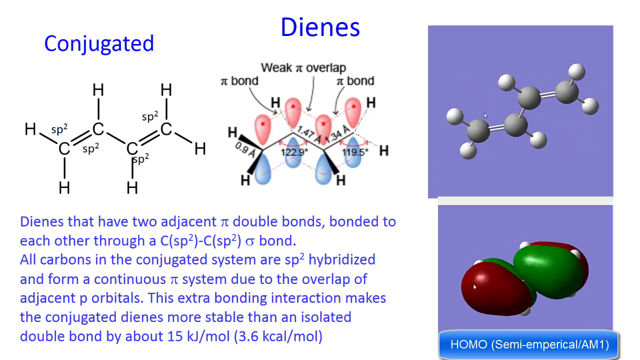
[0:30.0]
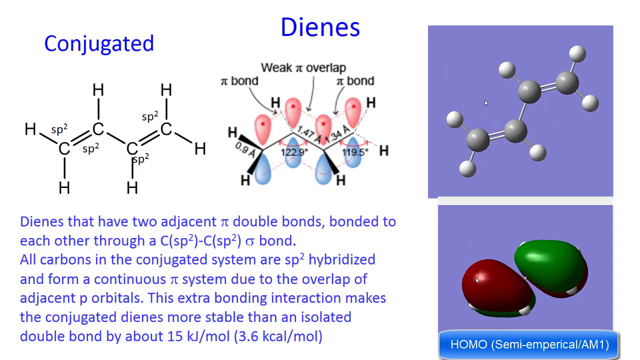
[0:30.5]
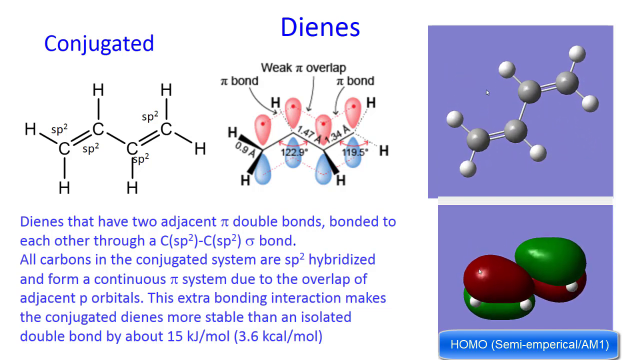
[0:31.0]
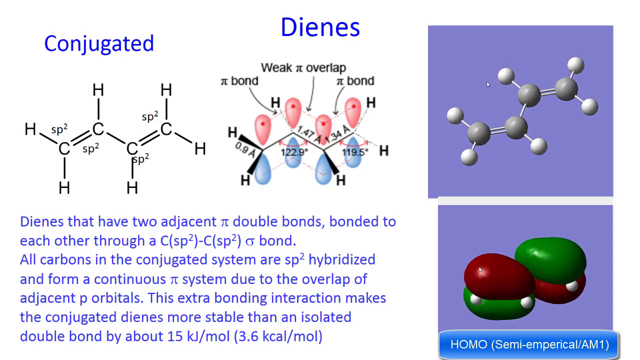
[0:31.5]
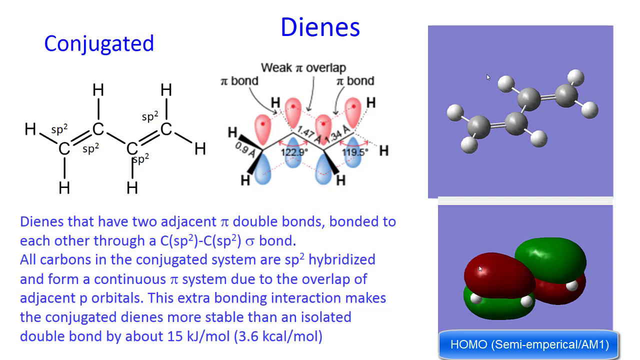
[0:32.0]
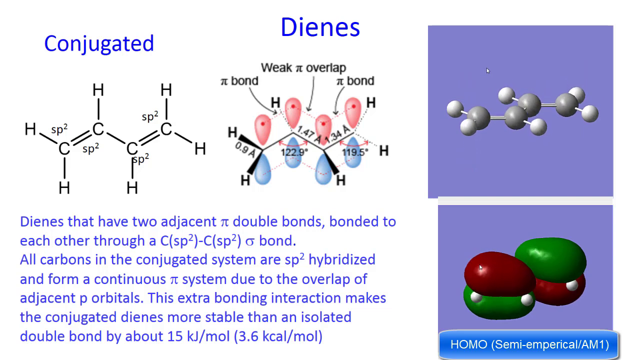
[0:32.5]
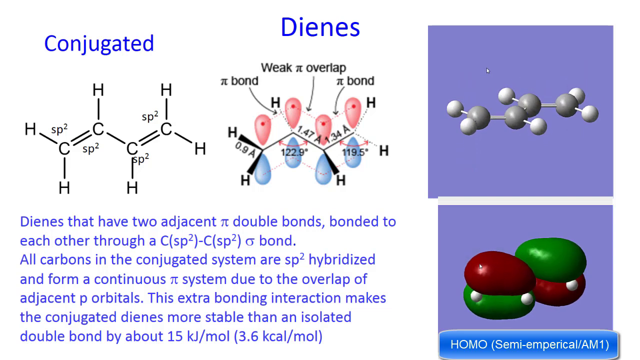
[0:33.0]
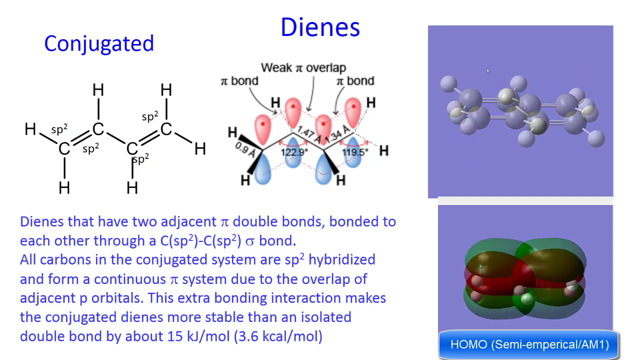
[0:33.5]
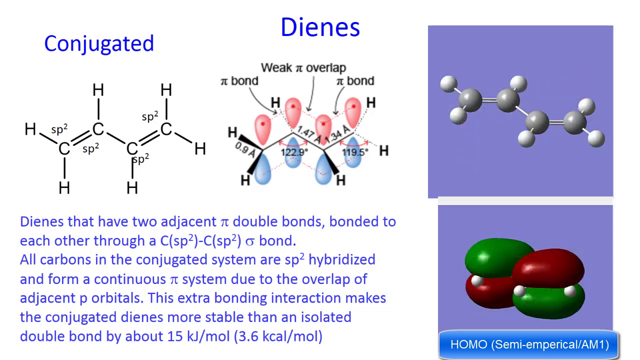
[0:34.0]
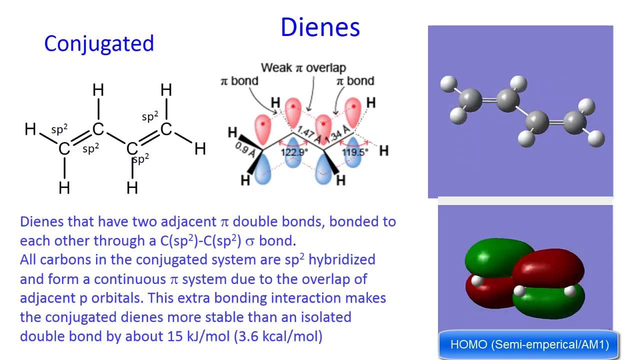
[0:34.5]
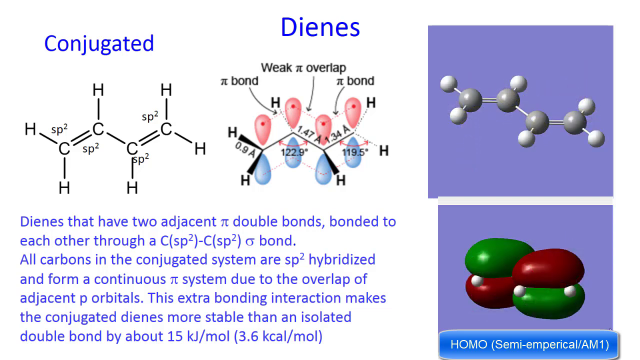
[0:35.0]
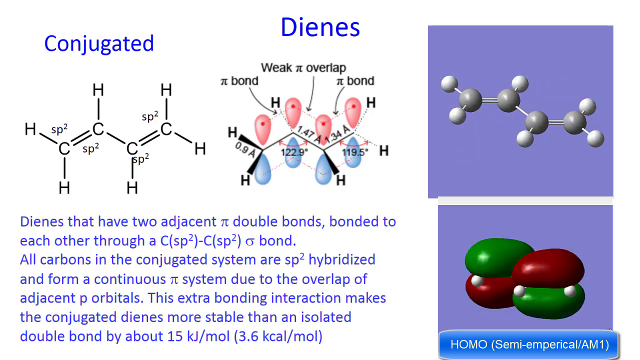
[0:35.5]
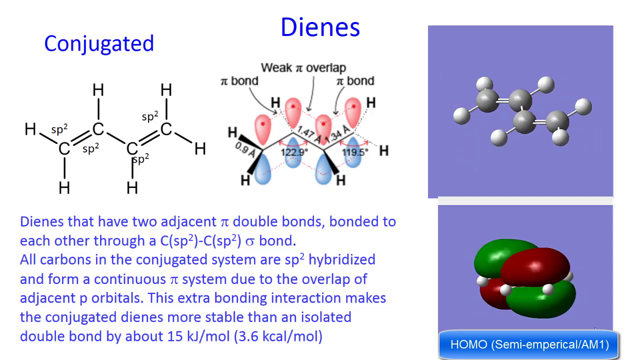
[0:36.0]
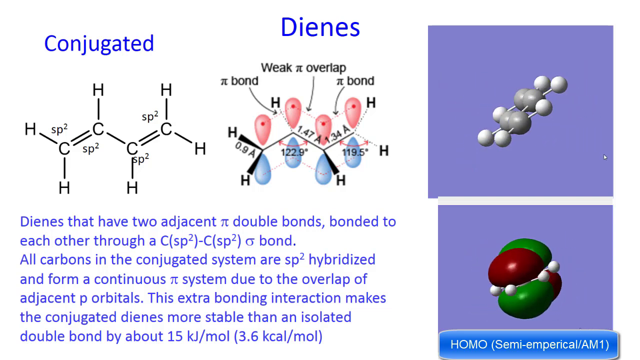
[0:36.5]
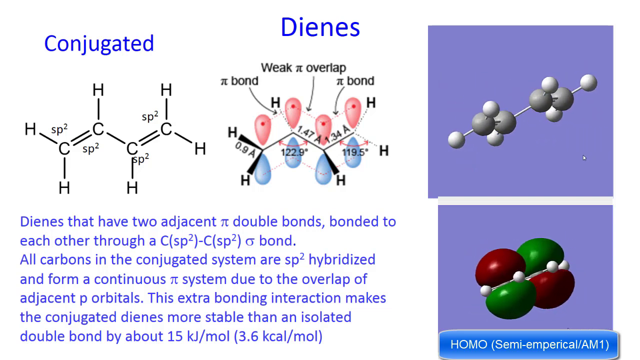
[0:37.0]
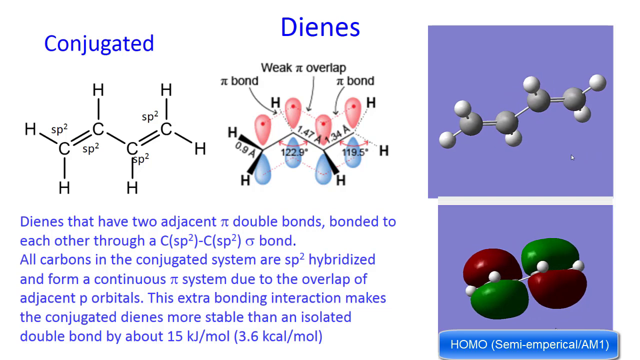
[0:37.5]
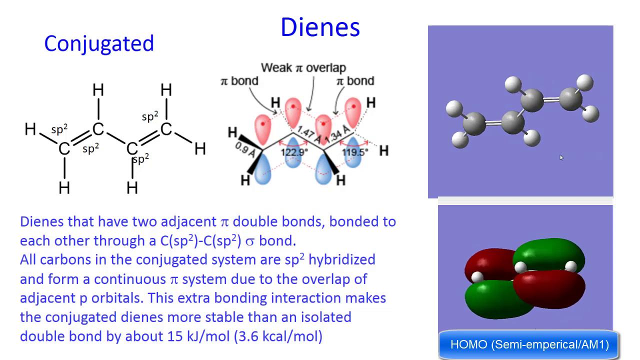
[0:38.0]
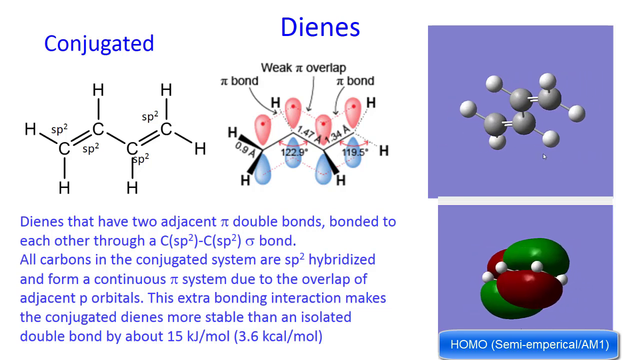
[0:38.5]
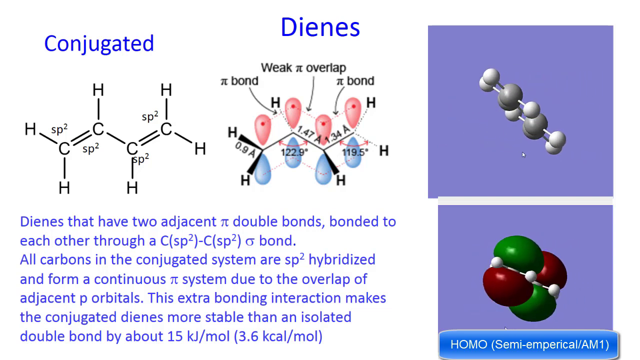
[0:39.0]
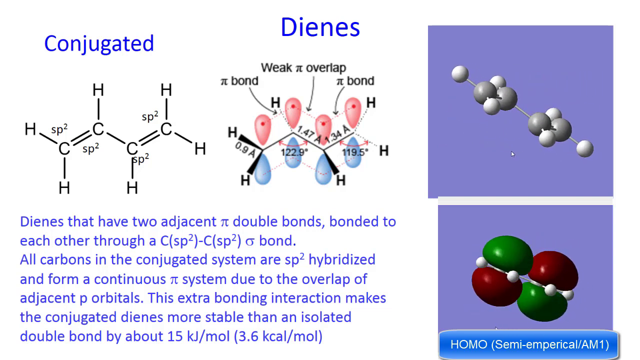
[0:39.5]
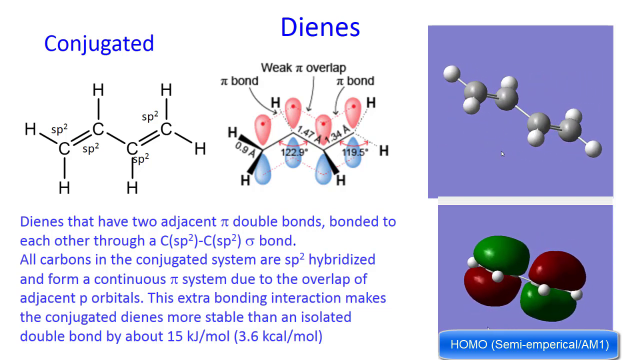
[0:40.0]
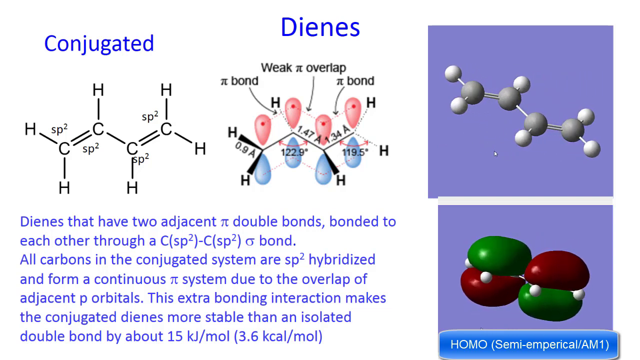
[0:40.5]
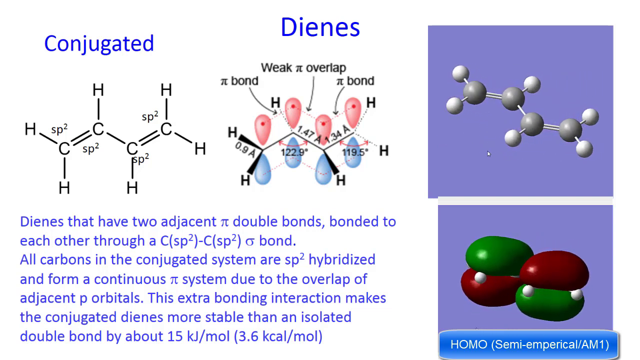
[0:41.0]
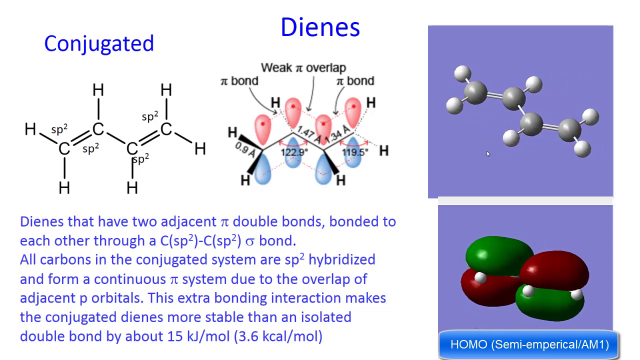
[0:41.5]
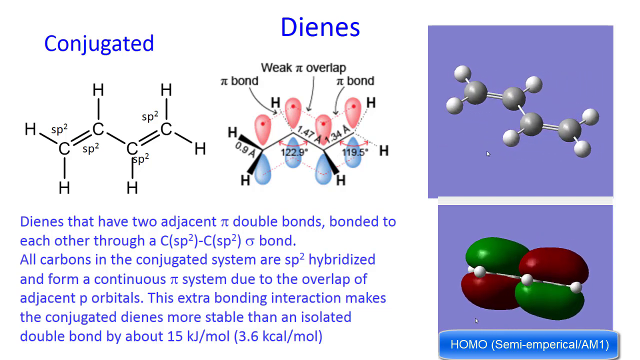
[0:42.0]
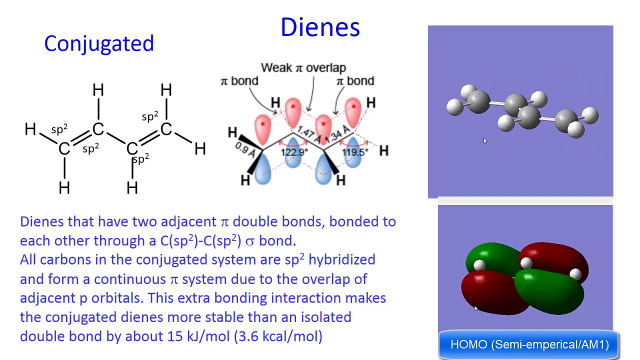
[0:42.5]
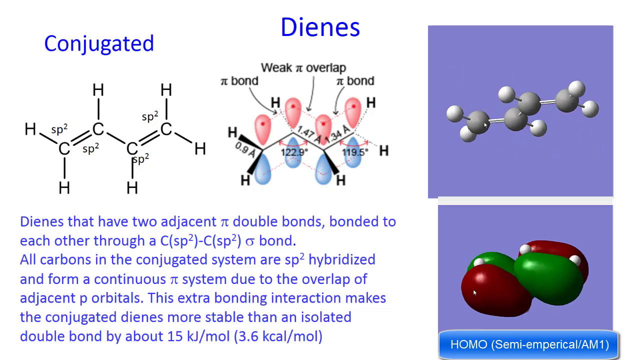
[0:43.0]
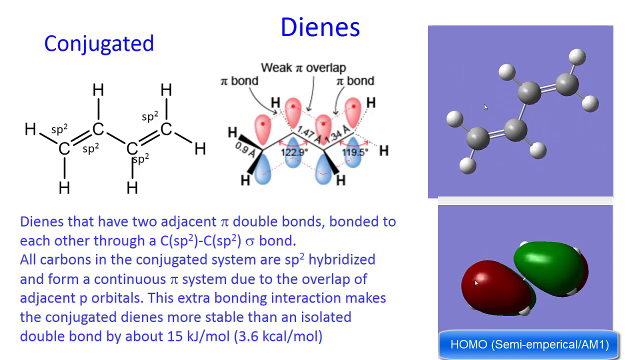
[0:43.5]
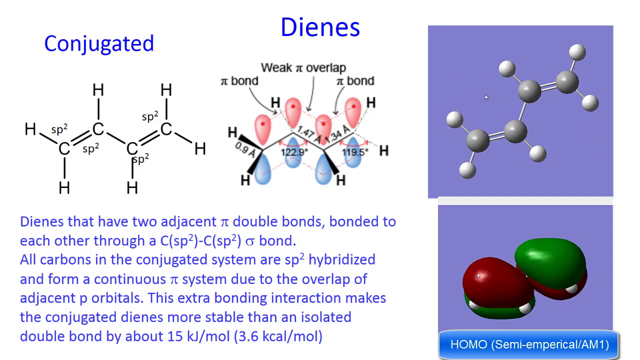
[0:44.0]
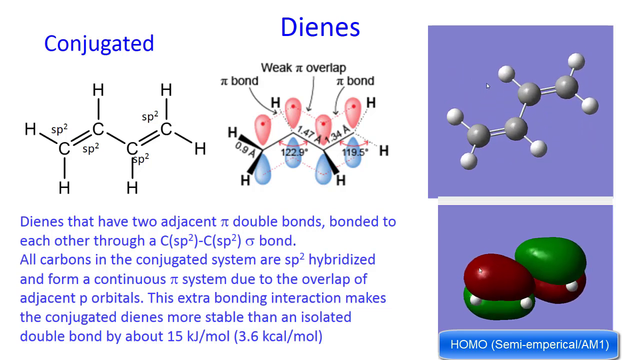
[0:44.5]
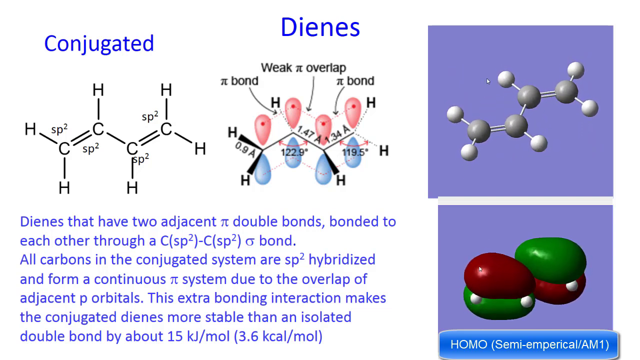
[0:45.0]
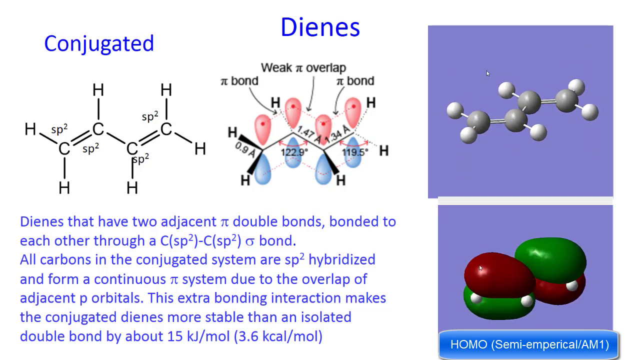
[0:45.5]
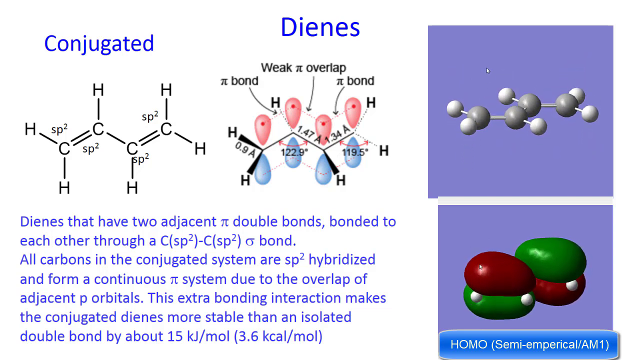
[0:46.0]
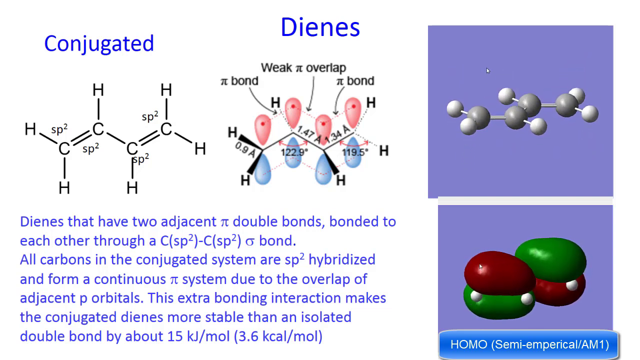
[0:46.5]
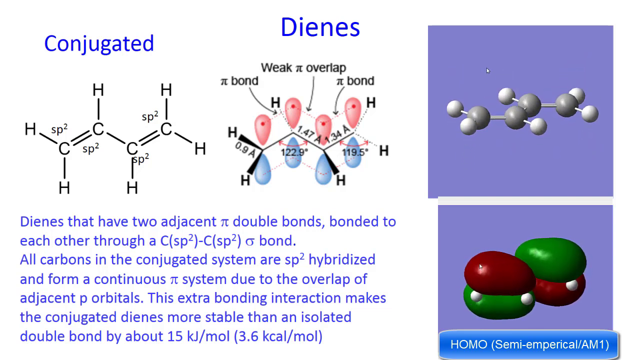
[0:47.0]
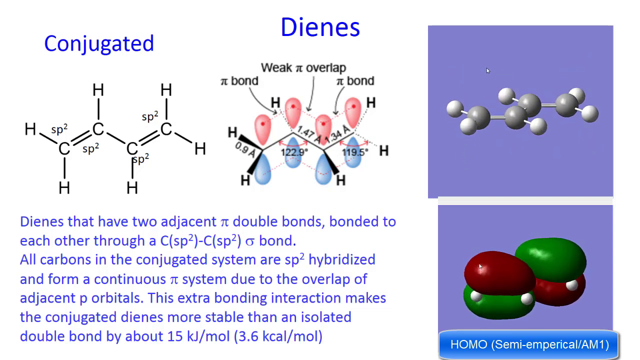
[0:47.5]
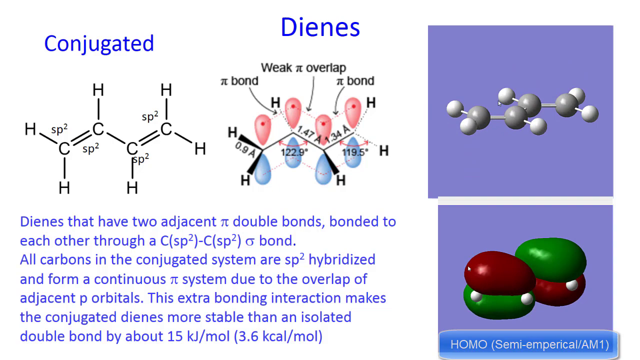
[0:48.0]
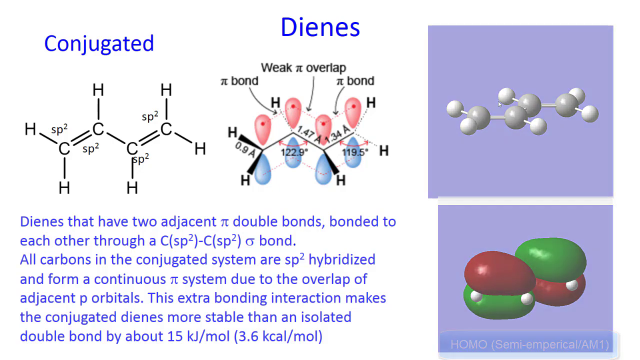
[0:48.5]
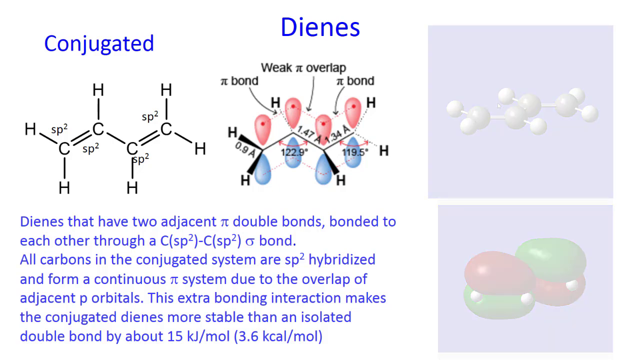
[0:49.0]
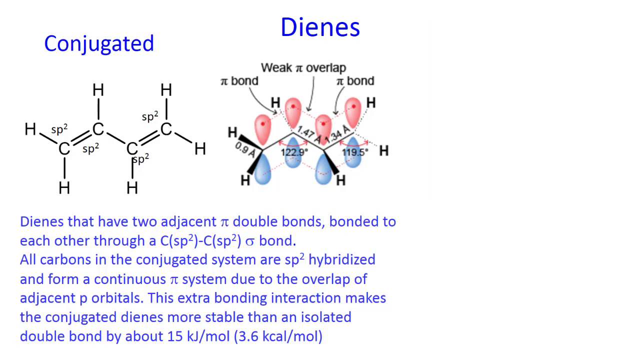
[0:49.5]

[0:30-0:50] The on-screen text on conjugated dienes continues: dienes that have two adjacent double bonds bonded to each other through a carbon bond, with all carbons in the conjugated system sp2-hybridized and forming a continuous π system due to the overlap of adjacent p orbitals, and the extra bonding interaction making conjugated dienes more stable by about 15 kJ per mole, 3.6 kcal per mole. Representations of the diene molecules are shown.